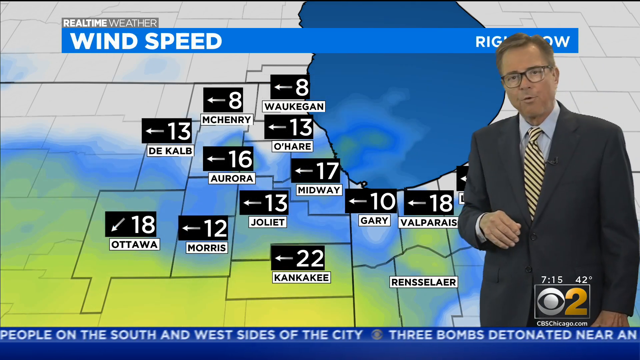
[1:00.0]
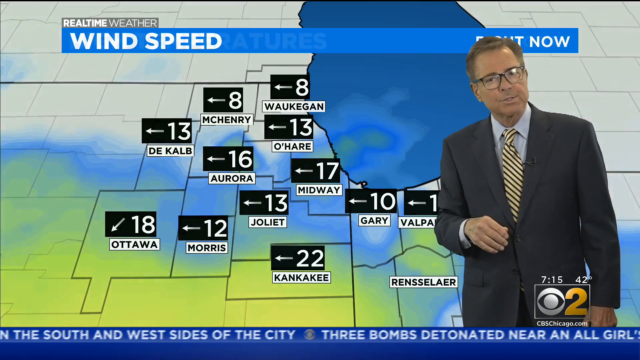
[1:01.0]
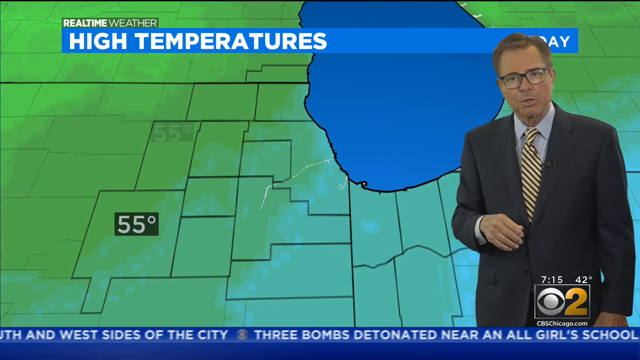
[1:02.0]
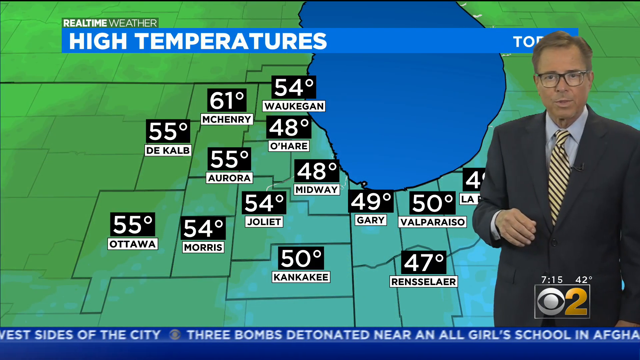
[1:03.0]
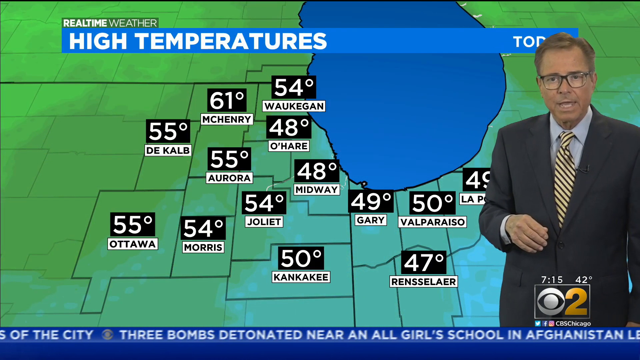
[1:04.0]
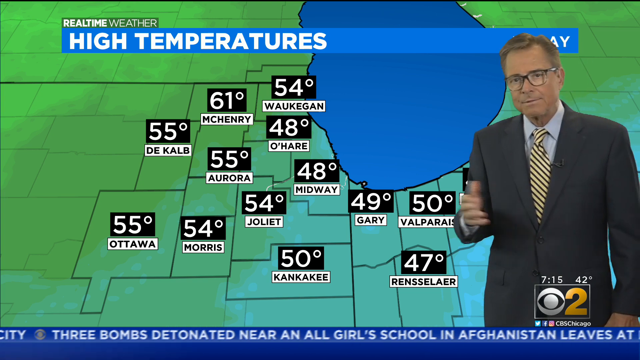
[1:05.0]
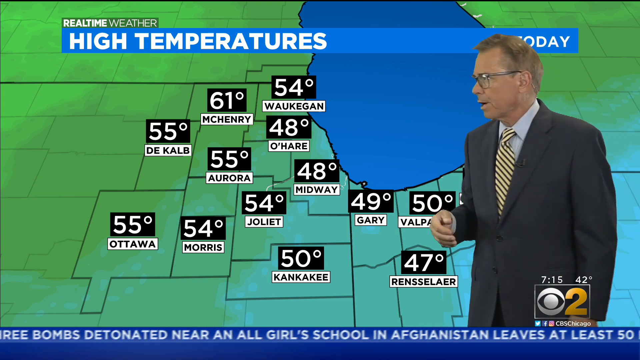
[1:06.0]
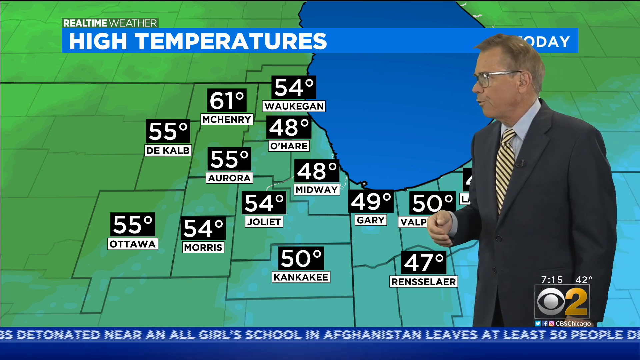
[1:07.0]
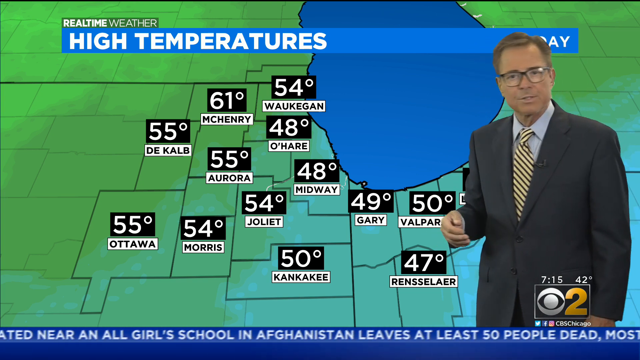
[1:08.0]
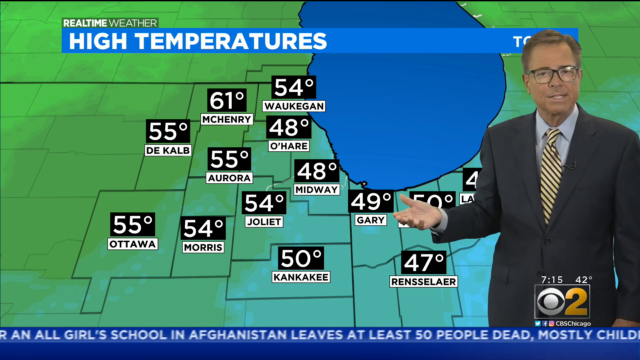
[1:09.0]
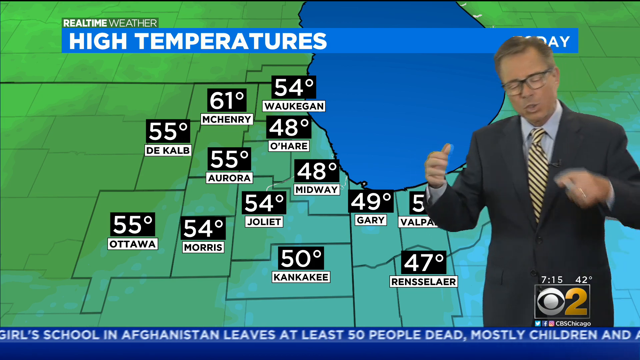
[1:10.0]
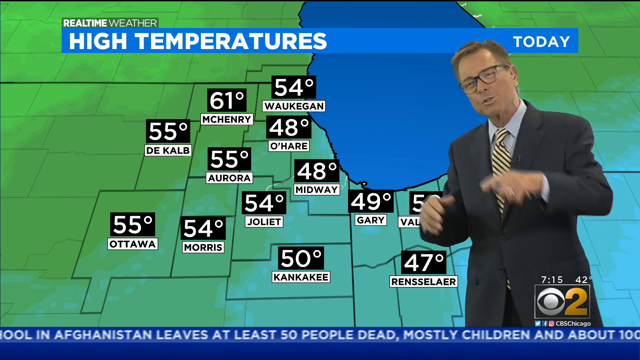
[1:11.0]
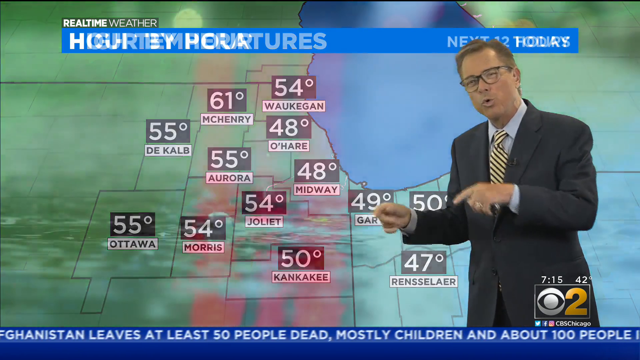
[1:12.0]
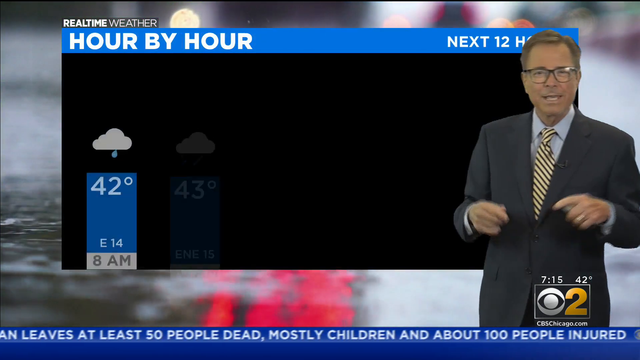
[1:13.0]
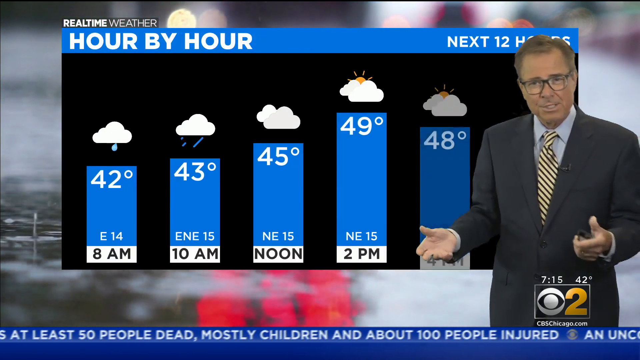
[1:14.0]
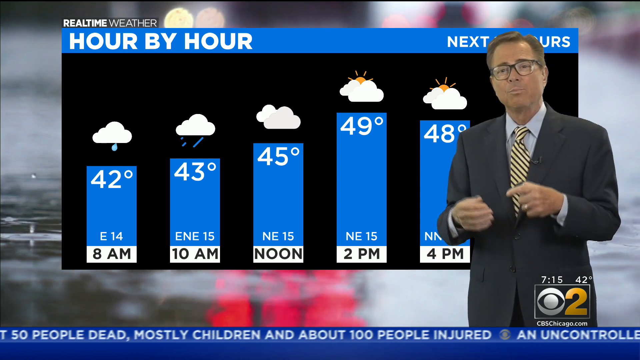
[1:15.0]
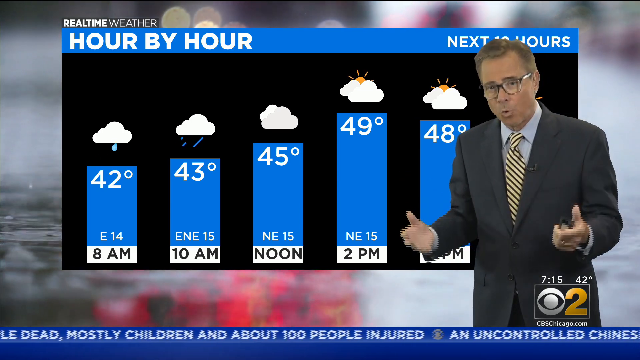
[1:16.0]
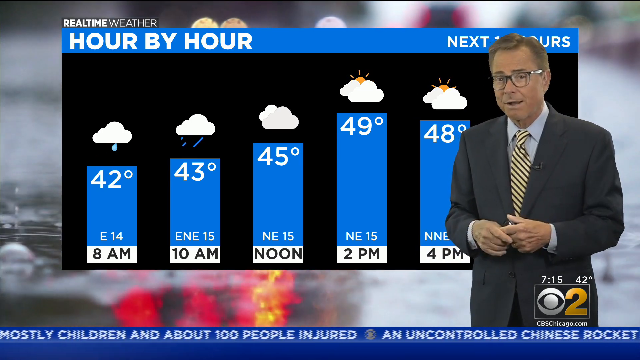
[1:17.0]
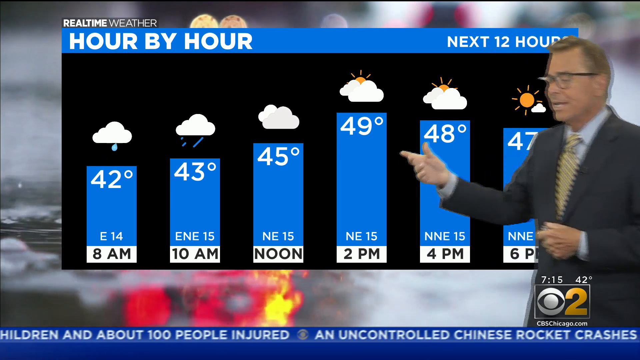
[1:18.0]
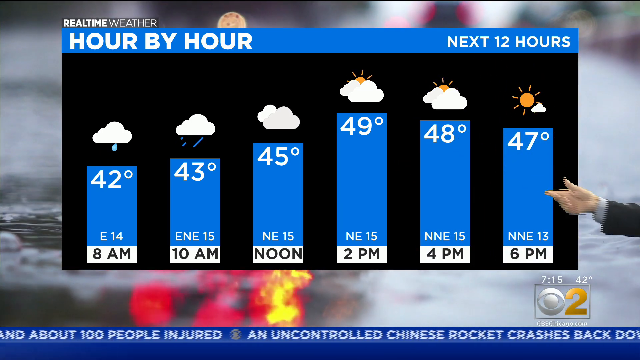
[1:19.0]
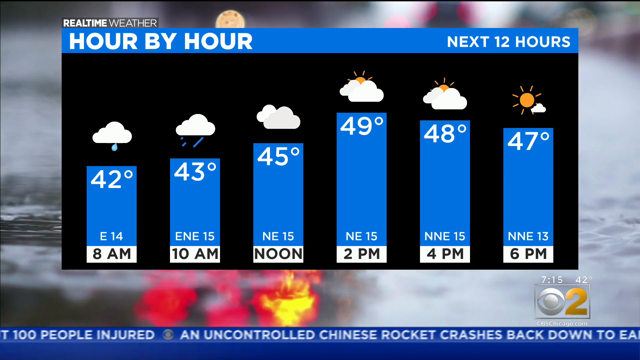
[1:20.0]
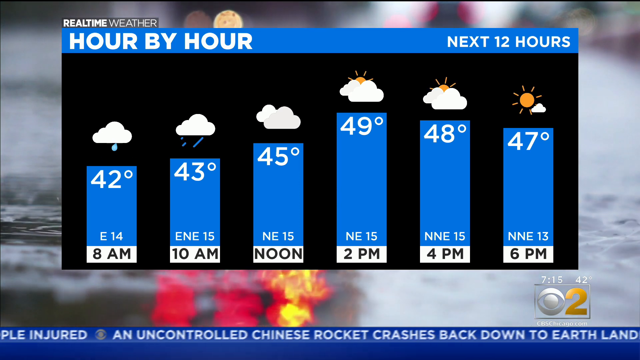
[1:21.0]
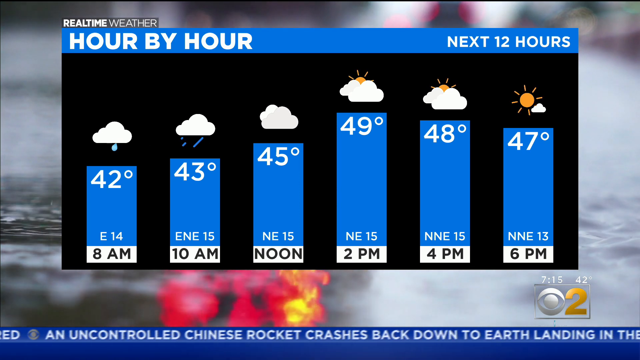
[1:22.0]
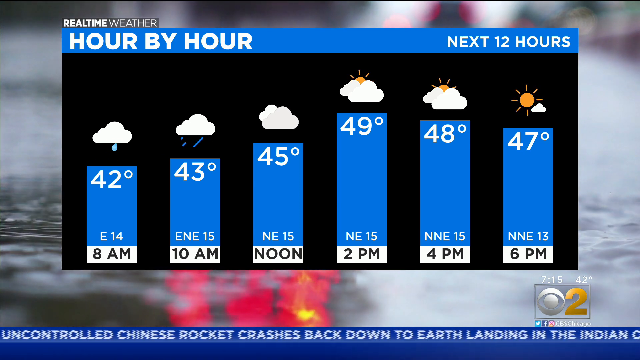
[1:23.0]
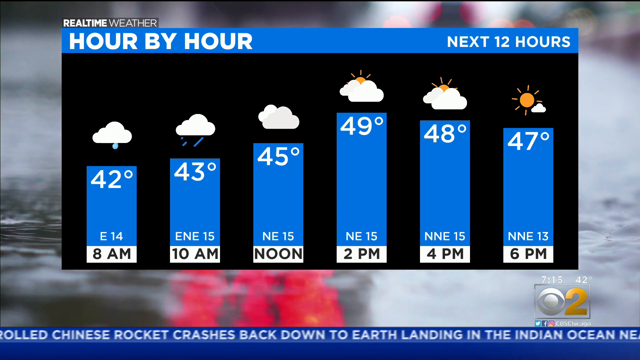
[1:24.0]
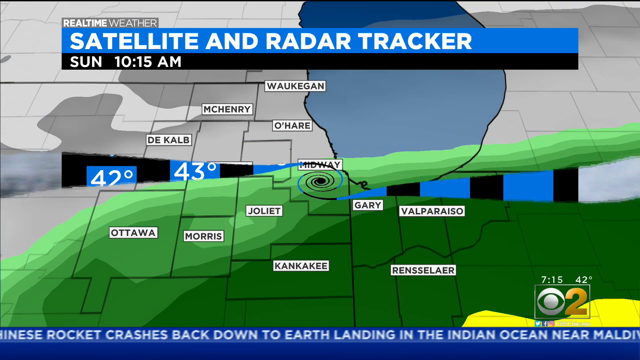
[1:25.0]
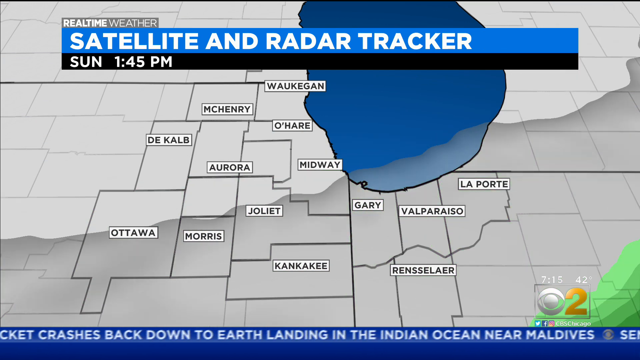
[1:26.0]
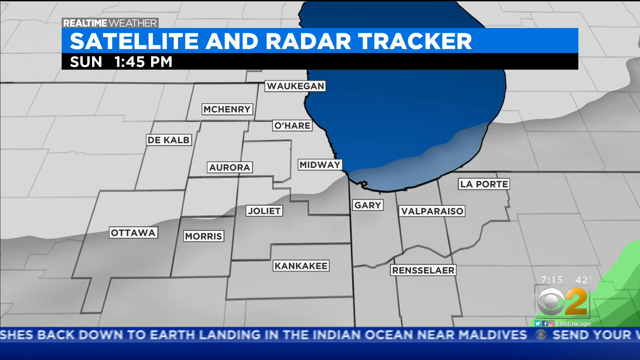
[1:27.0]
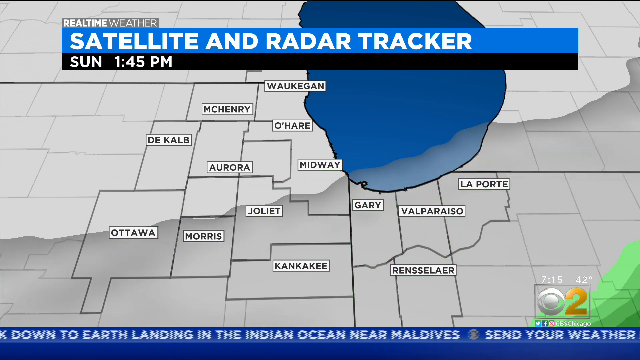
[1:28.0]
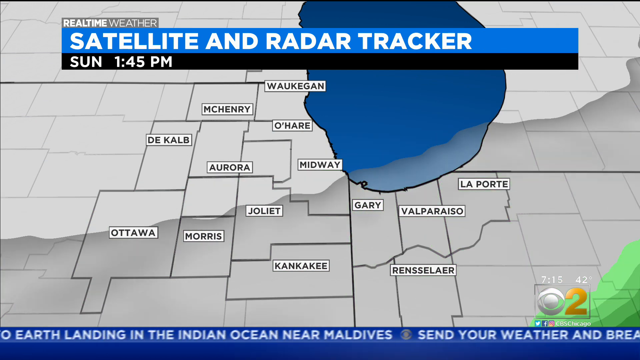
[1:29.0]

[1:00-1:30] The words "high temperatures" are written in bold white on a blue background. Mr. Ed Keron goes through the forecast from 8 a.m. to 6 p.m.: in the morning a high possibility of rain is indicated, and toward 5 p.m. the weather is shown changing, with some sunshine indicated on the screen. A satellite and radar tracker for different cities is shown on the screen. The cities are written in block letters, each city in its own block.